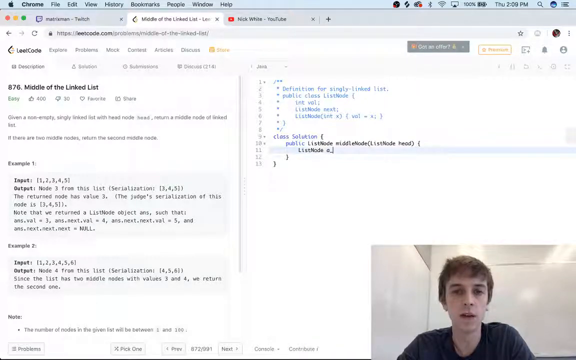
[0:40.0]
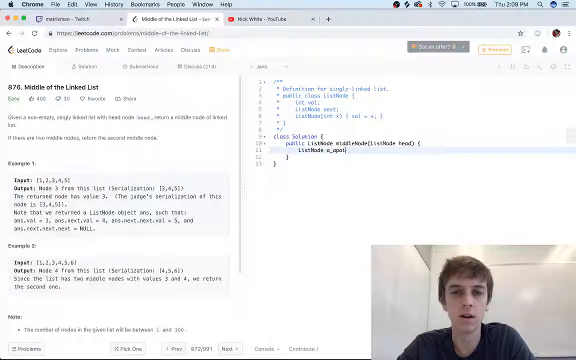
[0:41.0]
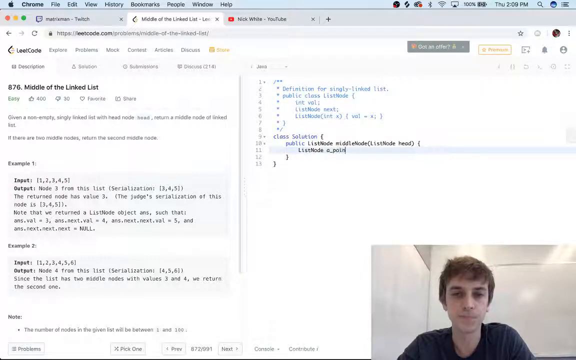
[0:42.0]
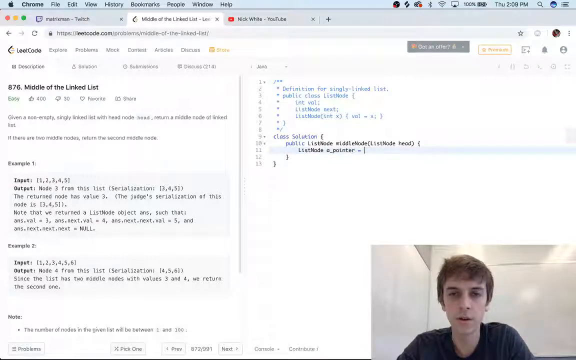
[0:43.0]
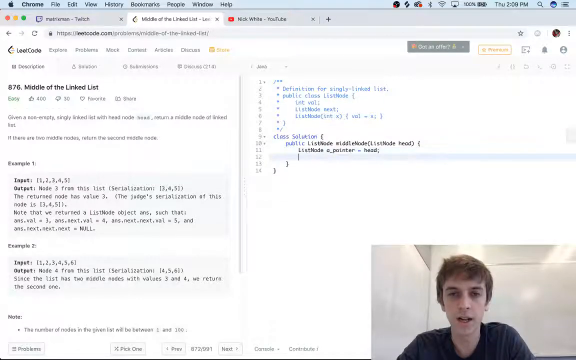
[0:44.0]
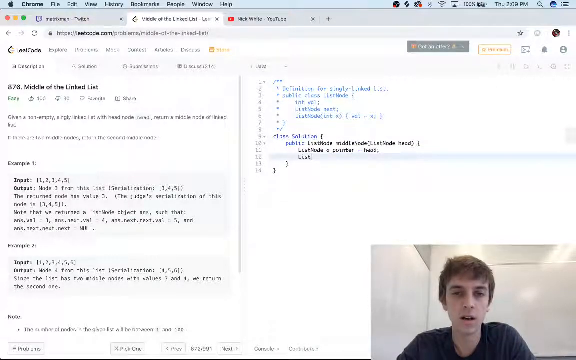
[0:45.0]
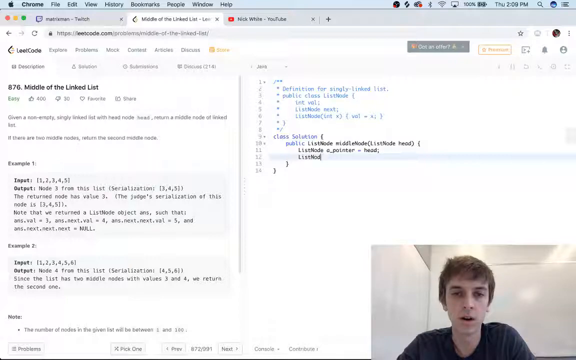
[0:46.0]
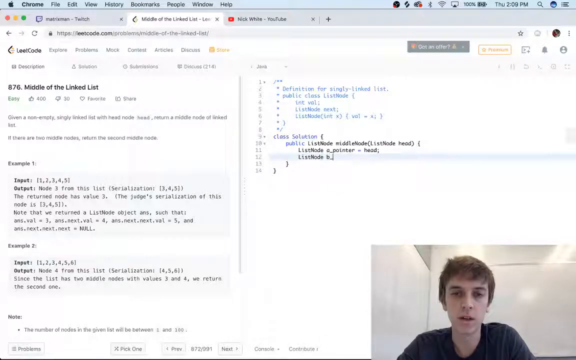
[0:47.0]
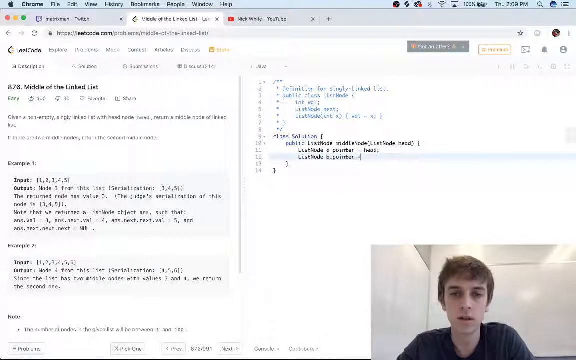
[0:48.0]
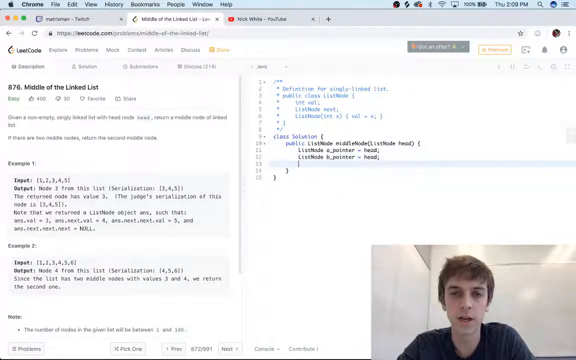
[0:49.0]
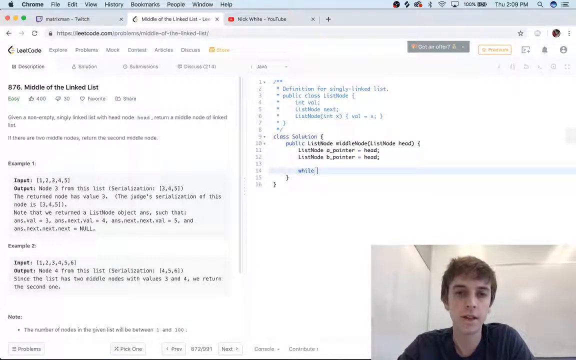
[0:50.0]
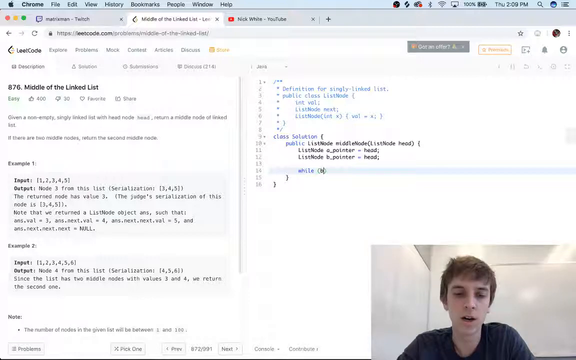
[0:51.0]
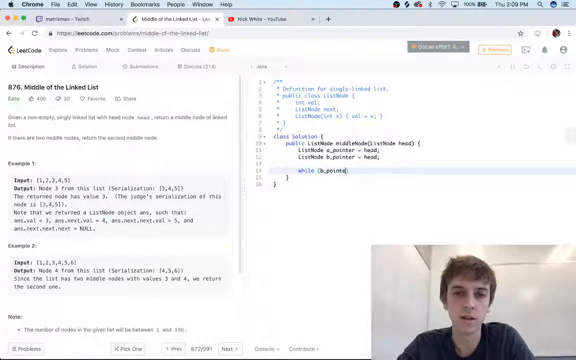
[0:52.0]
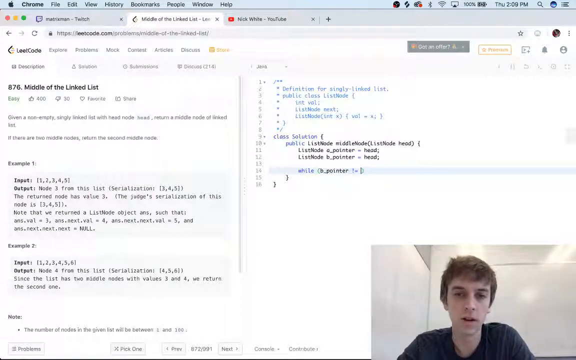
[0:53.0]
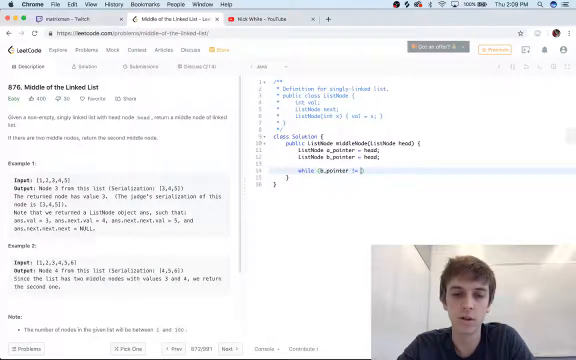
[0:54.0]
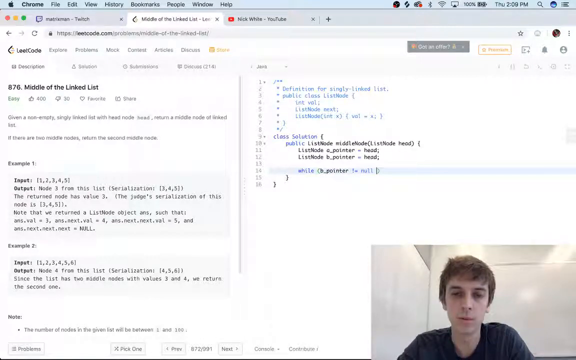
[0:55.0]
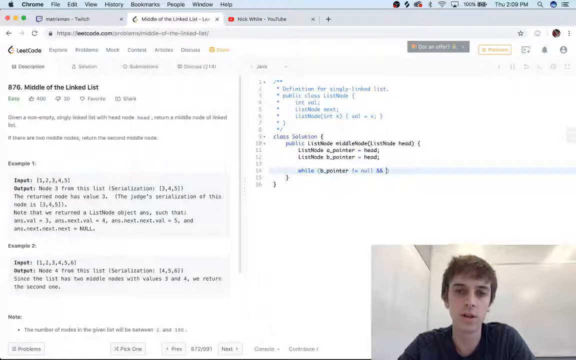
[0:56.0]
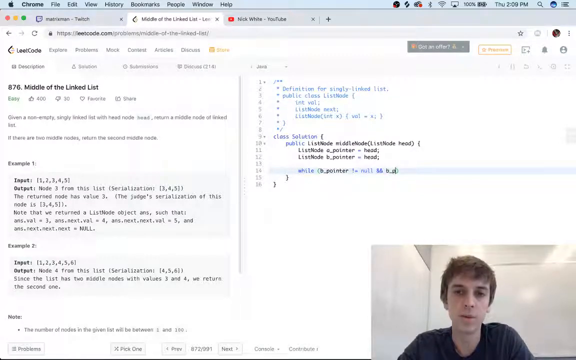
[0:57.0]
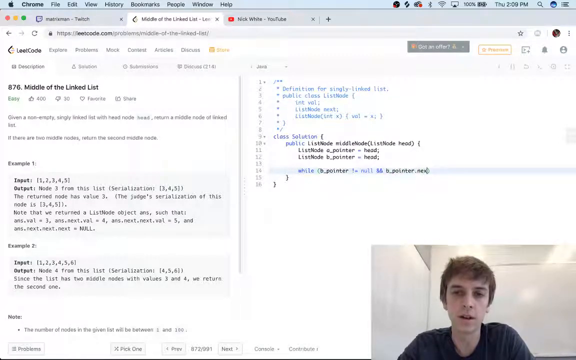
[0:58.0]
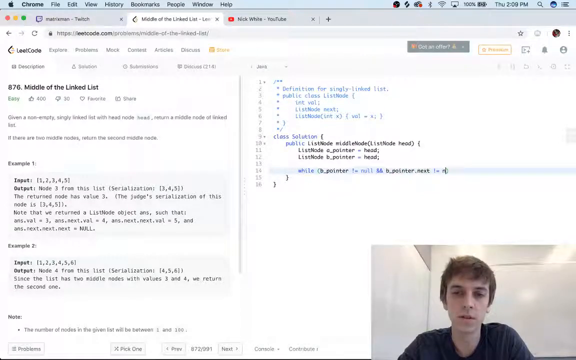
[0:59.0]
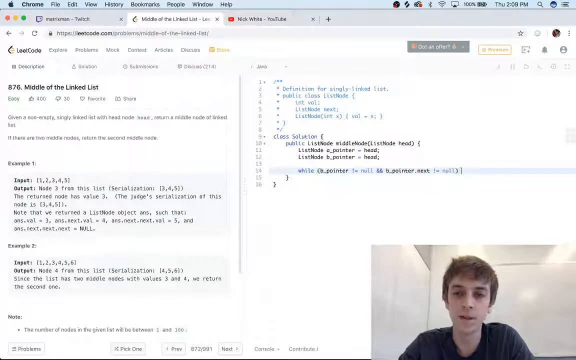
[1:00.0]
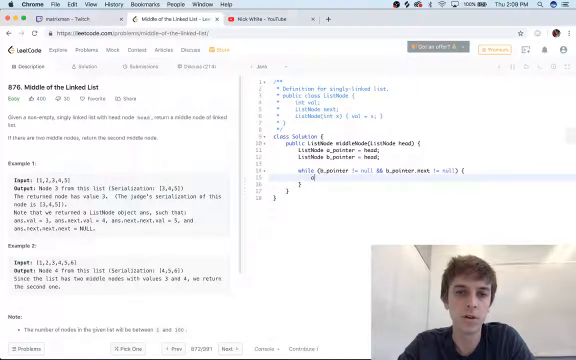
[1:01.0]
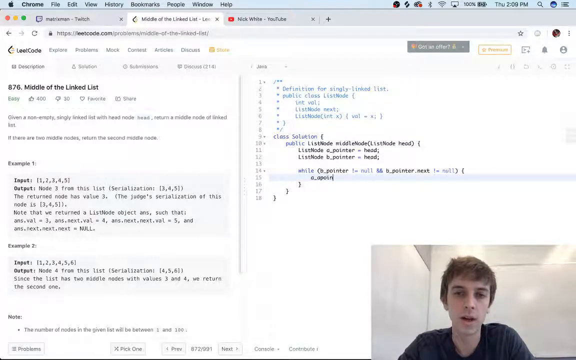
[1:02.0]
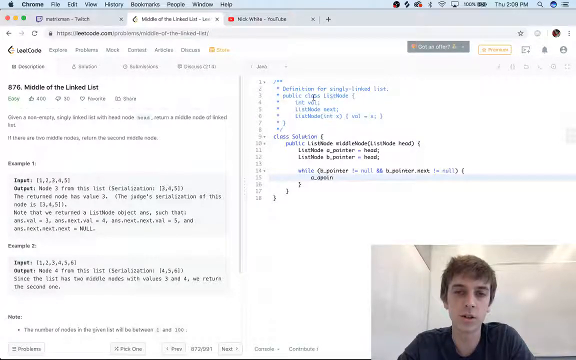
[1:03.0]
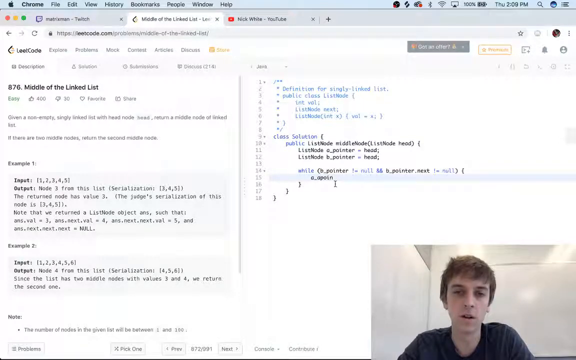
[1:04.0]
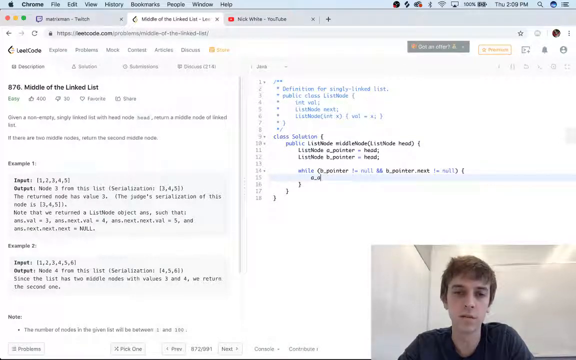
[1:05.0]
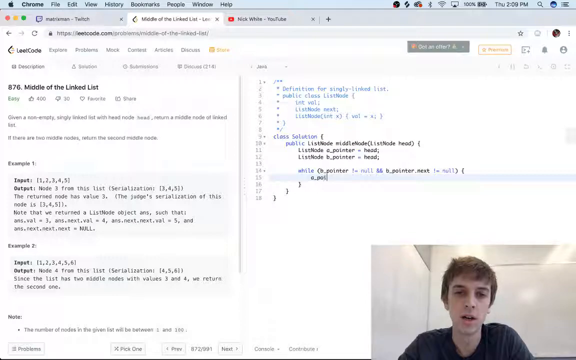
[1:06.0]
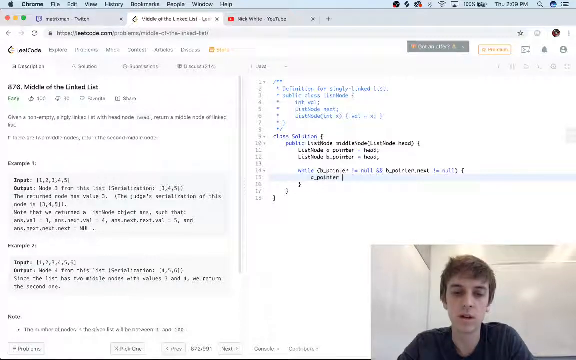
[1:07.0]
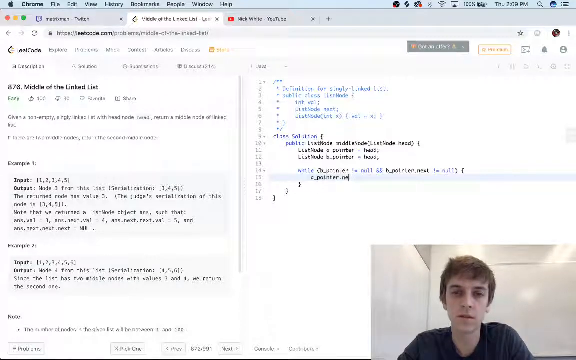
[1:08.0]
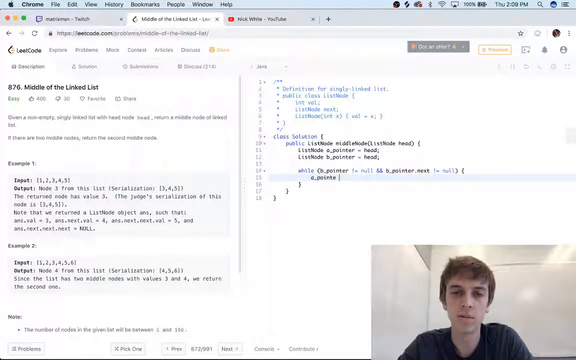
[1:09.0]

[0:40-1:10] The speaker continues writing his example code, which reads "class solution" with an open bracket. The following line reads "public listNode middleNode" with "listNode head" in parentheses and an open bracket. The next line reads "listNode p_pointer - head", and the line below it "listNode b pointer - head". Two lines further down, he types a line beginning "while b pointer is null". He makes a few typos but keeps typing. He makes solid eye contact with the camera, apparently because that is where his screen is. Other tabs are open to music on YouTube and to a streamer on twitch.tv. He appears to be coding on a Mac, as the Chrome he has open is the Mac version.